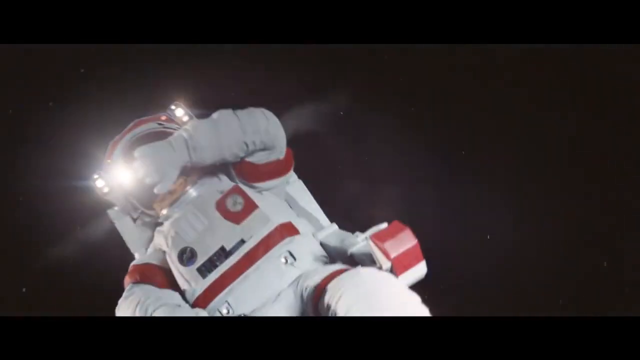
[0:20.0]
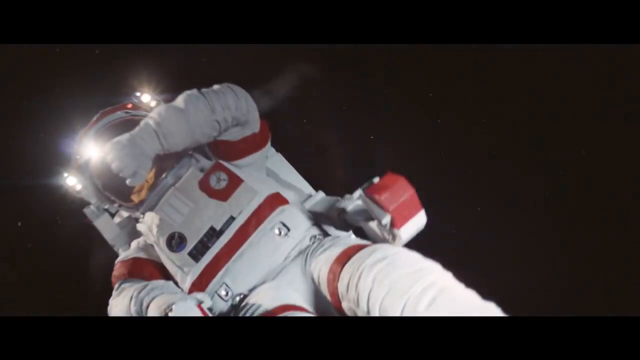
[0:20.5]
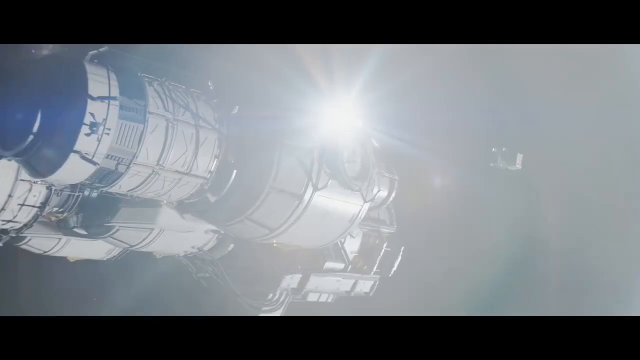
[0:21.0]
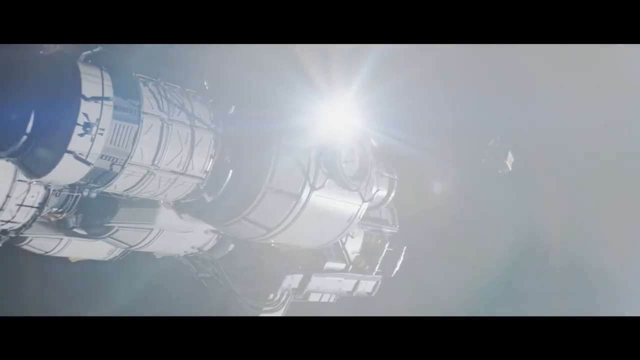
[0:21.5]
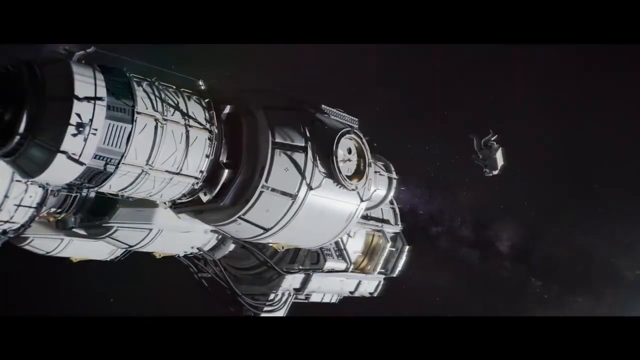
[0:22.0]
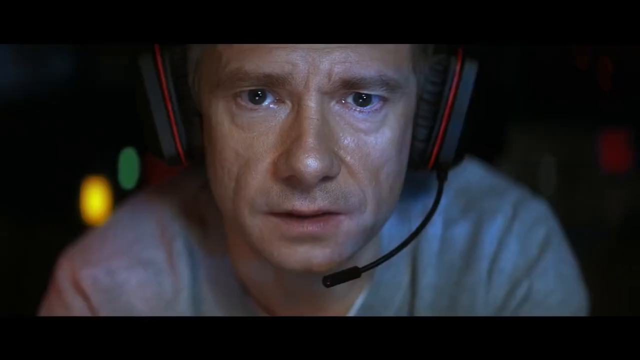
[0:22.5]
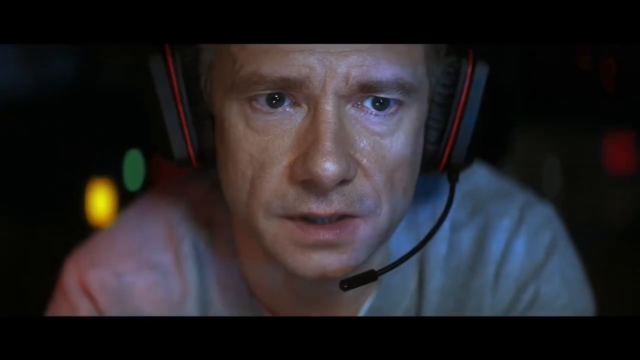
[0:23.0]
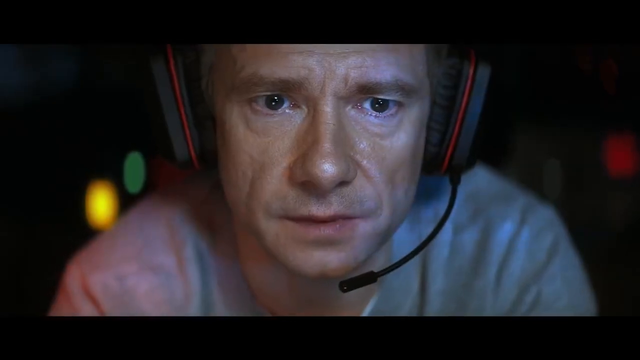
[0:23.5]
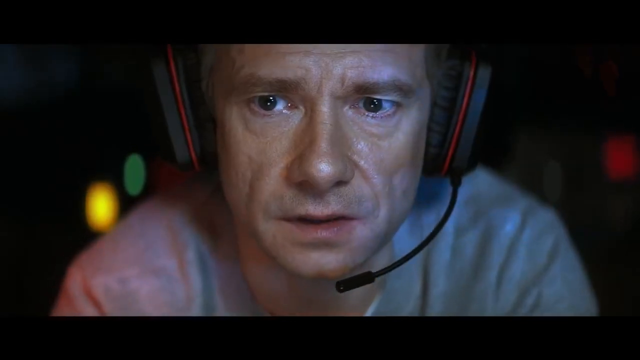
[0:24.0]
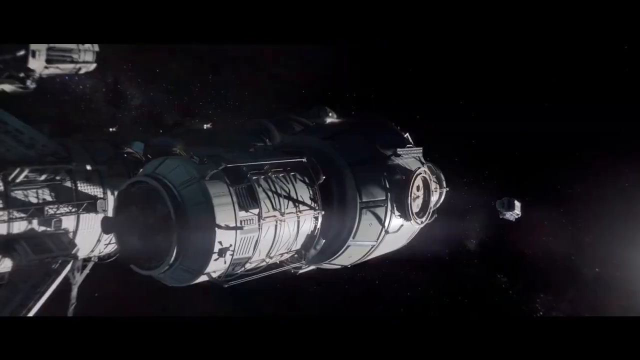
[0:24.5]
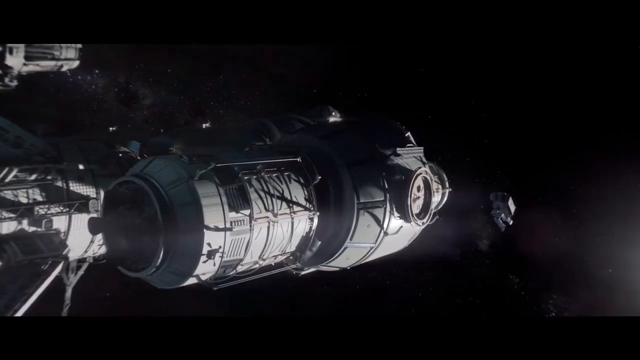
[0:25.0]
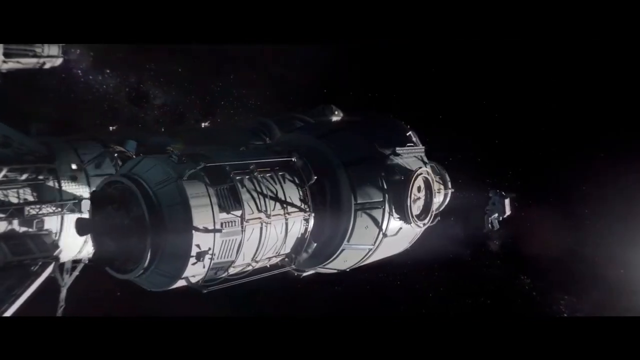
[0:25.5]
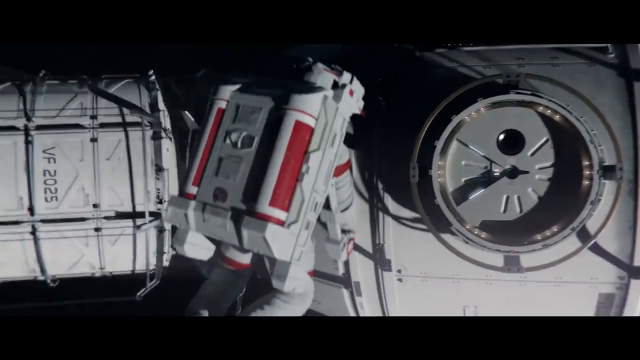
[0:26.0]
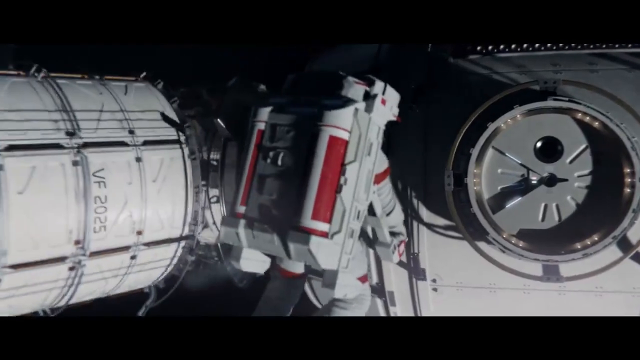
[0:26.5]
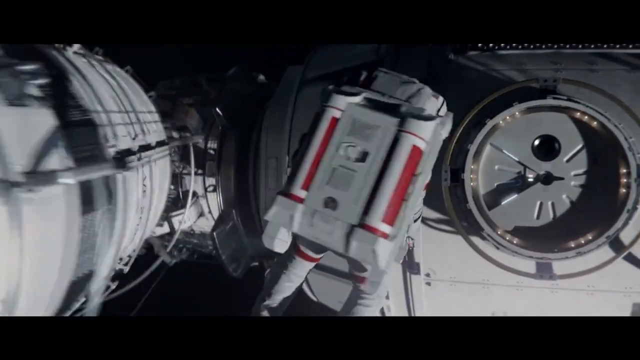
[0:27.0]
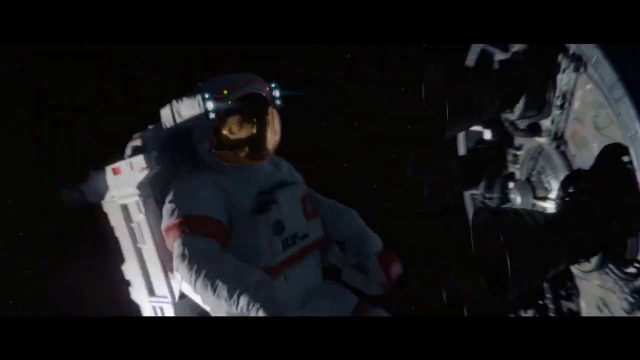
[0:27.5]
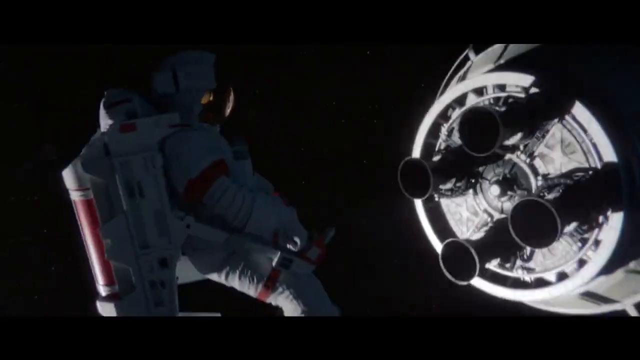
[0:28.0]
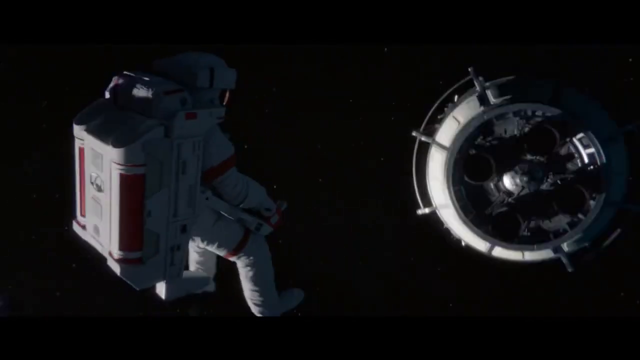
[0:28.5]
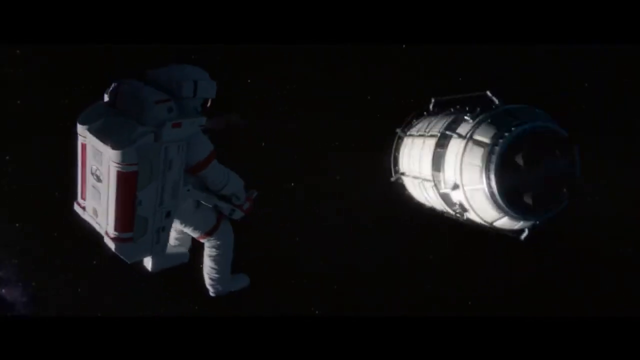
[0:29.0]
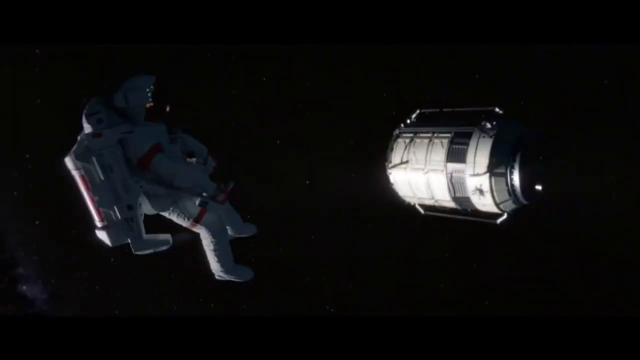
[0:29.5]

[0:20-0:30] The person in the white and red spacesuit floats through space up to the side of a spaceship; as he gets near, a bright light comes on and blinds him, and he puts his hands up in front of his face to block it. A man inside the spaceship, who looks like he is behind a control center, wears headphones with a microphone. In another shot, the spaceman floats toward the spaceship, and as he gets near, a piece of the spaceship looks like it breaks off the side and goes tumbling out toward him. It does not hit him but floats by, and he turns his body to watch the big piece float past him and out into space.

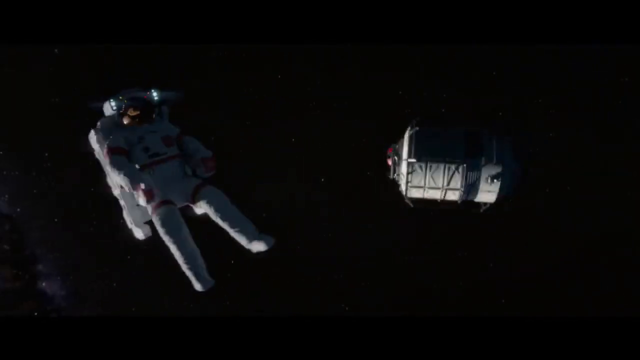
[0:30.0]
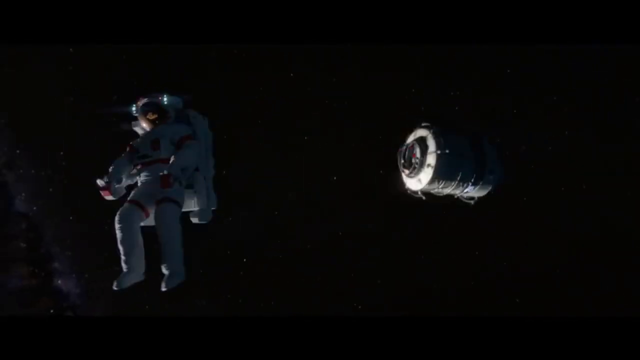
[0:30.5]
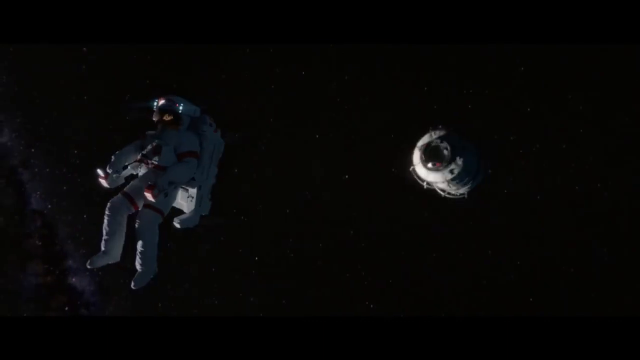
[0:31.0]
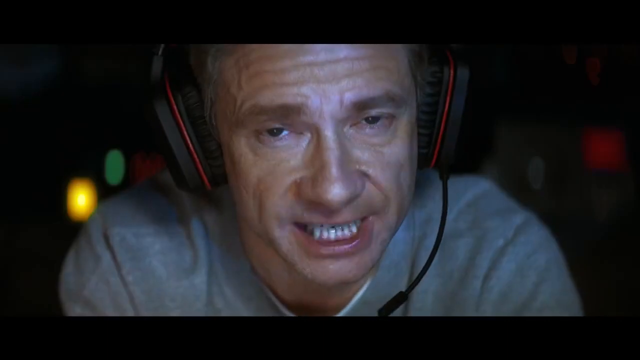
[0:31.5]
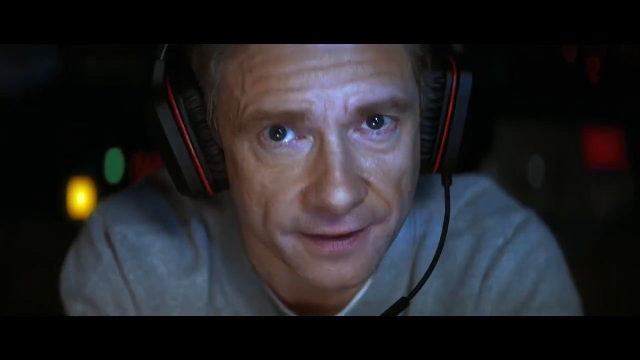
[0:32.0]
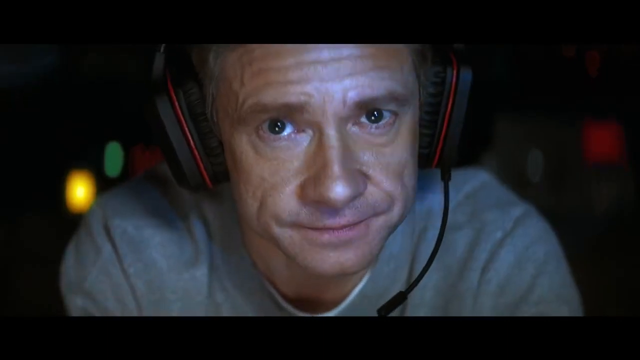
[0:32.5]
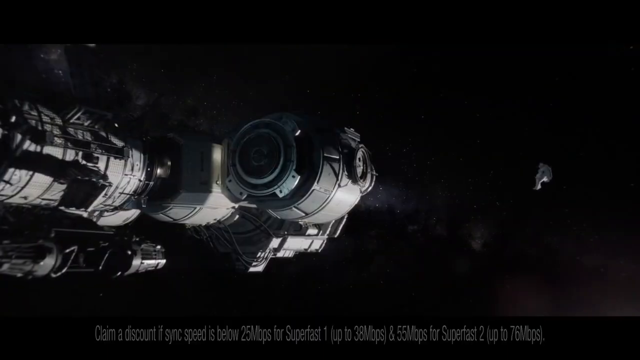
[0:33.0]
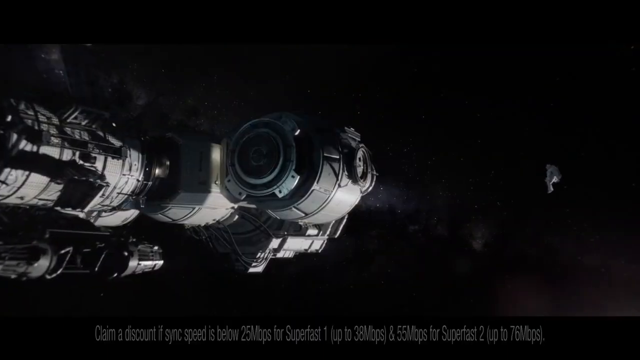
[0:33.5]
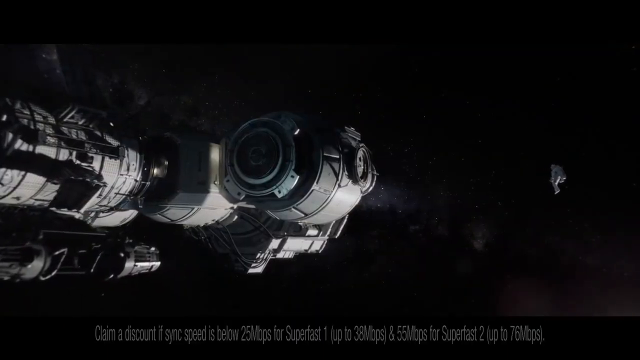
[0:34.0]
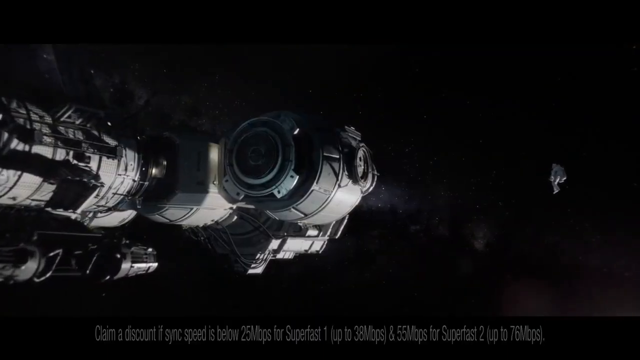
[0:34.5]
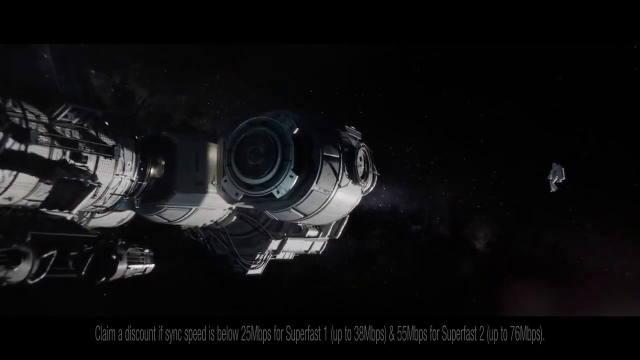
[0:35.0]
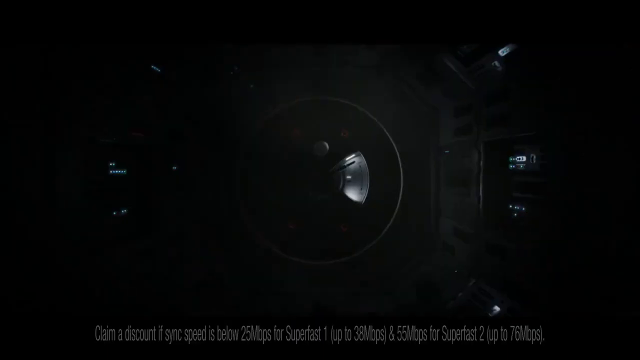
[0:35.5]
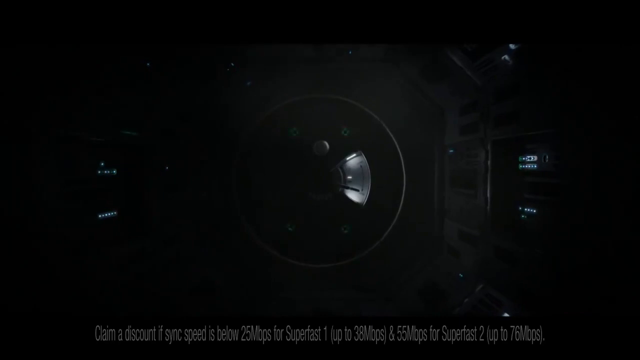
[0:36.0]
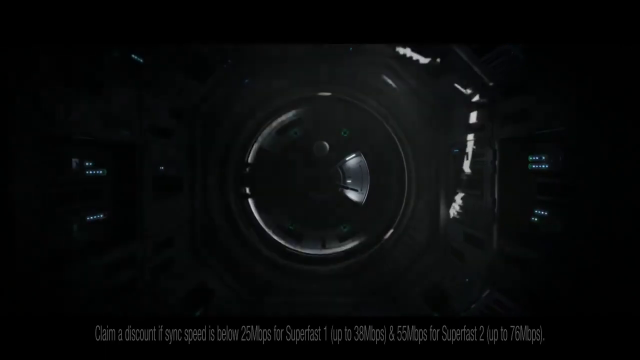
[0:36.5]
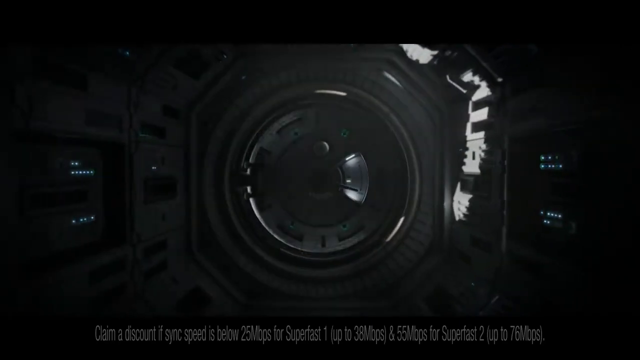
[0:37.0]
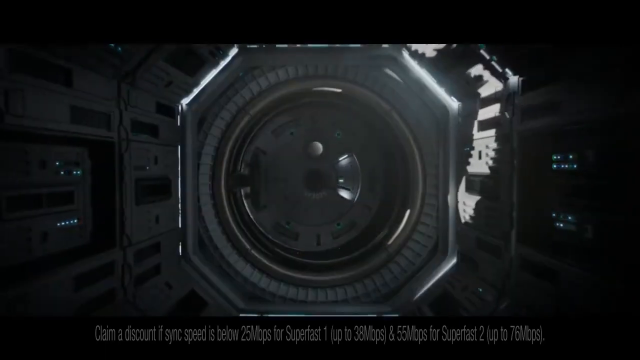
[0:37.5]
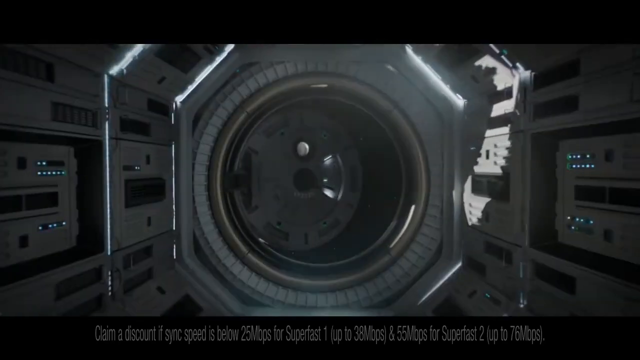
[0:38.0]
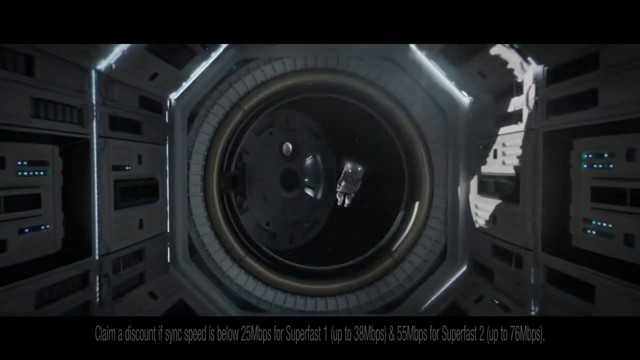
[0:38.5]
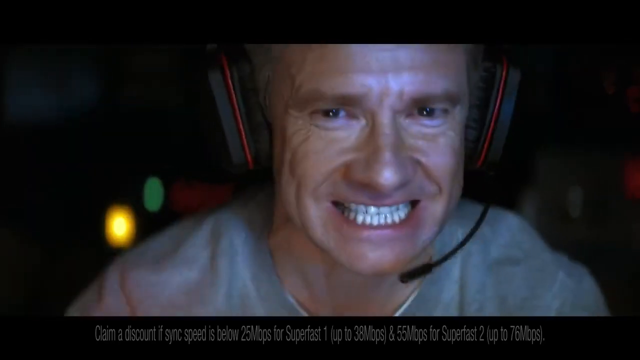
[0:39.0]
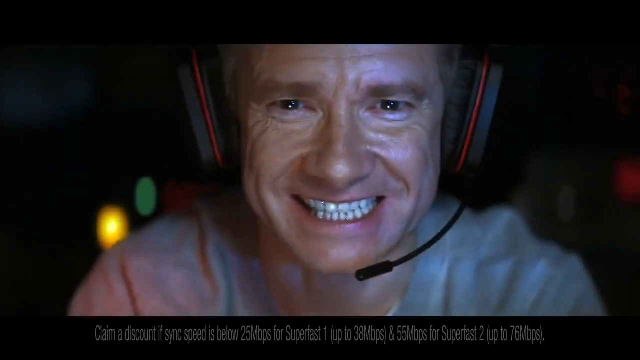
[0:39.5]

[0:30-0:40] The person in the red and white spacesuit floats kind of out of control into space as a big piece of the spaceship floats farther and farther out. The man sits inside the spaceship, apparently behind a control panel, wearing headphones with a microphone, and talks as if he is speaking to the person floating in space. The floating person, in a white spacesuit with red stripes, seems to be getting farther from the spaceship, but then a hatch opens on the spaceship, and the man inside looks like he begins to celebrate as it opens, apparently trying to retrieve the person in space.